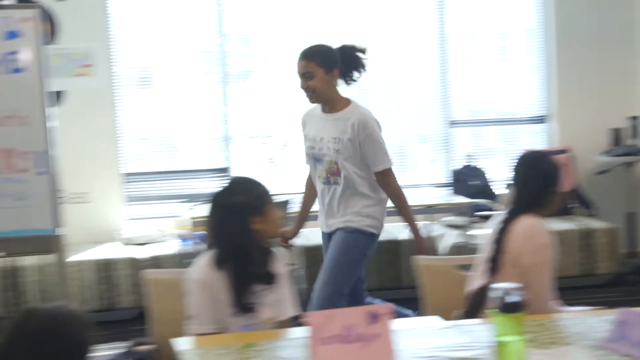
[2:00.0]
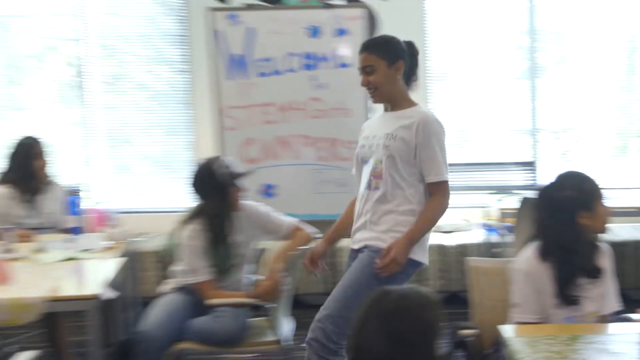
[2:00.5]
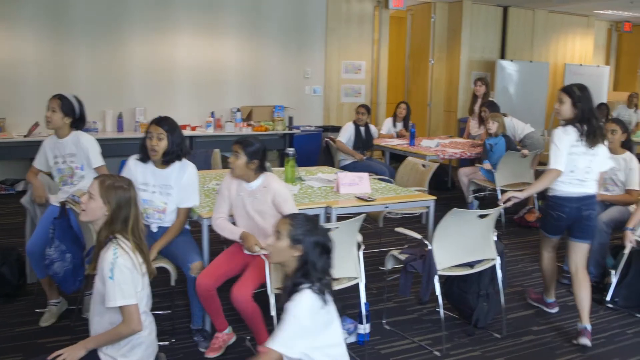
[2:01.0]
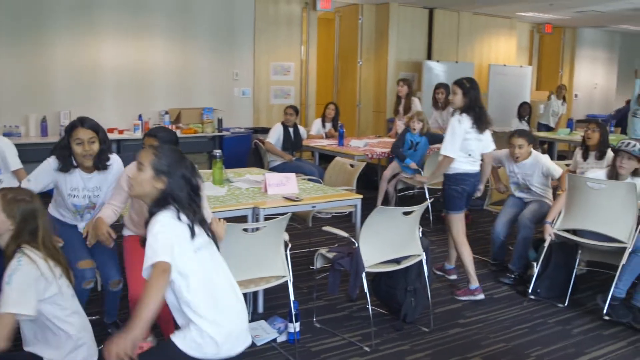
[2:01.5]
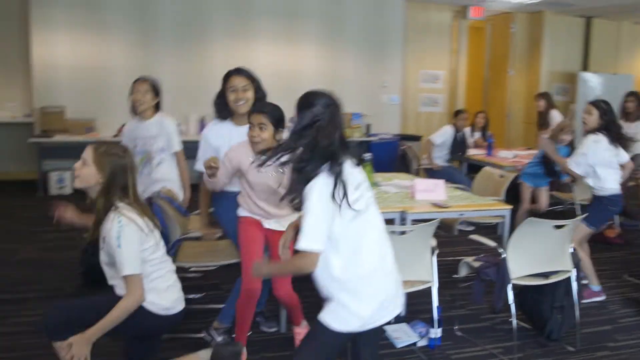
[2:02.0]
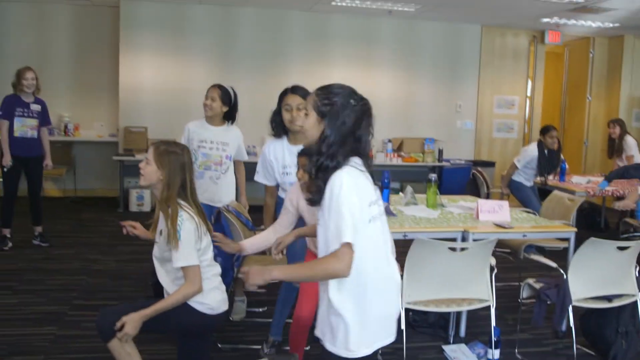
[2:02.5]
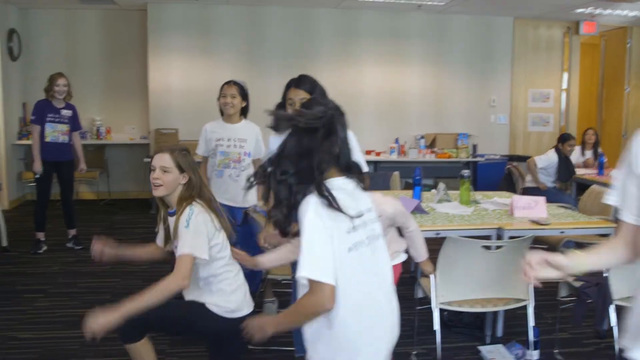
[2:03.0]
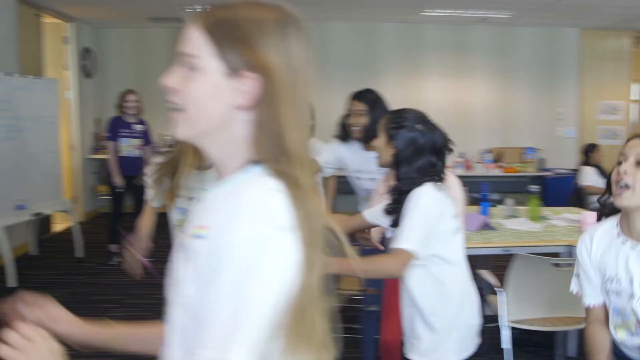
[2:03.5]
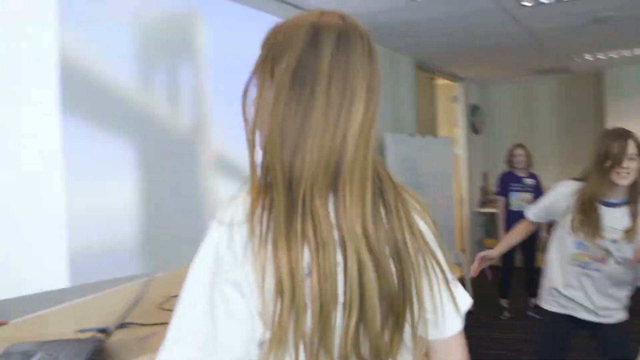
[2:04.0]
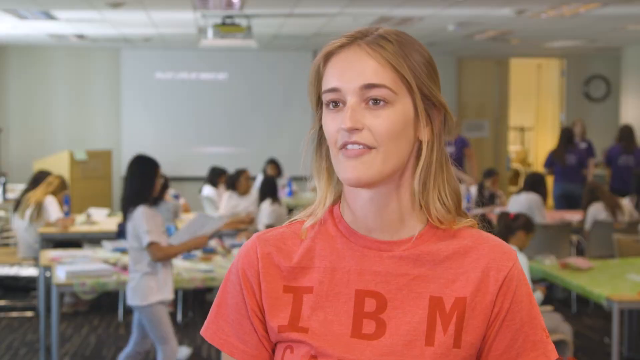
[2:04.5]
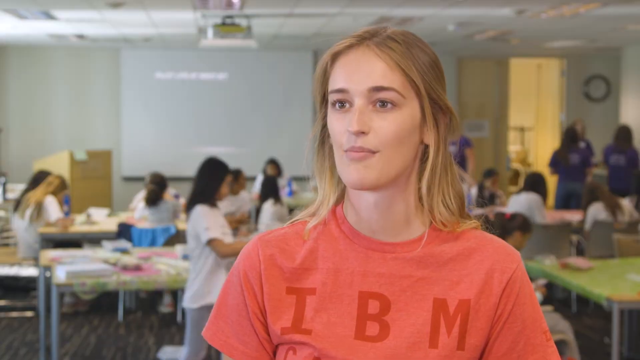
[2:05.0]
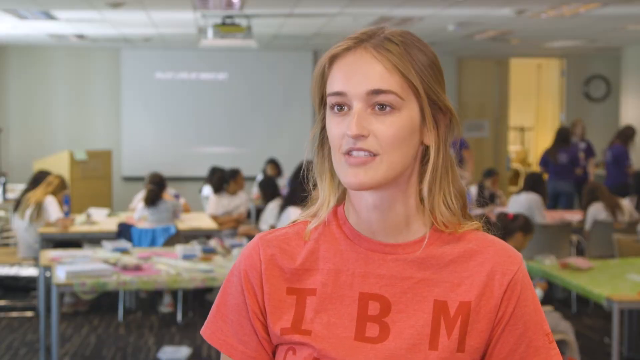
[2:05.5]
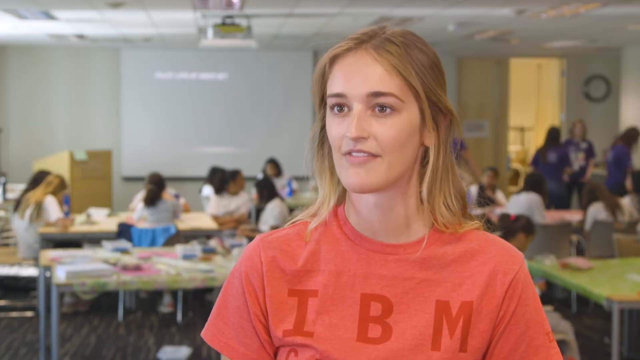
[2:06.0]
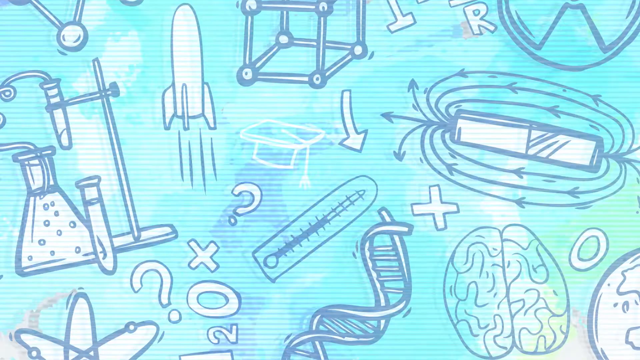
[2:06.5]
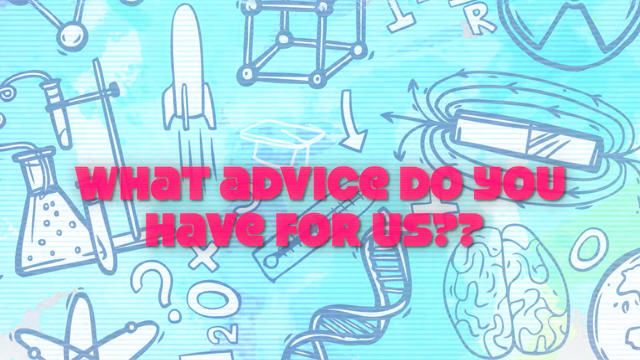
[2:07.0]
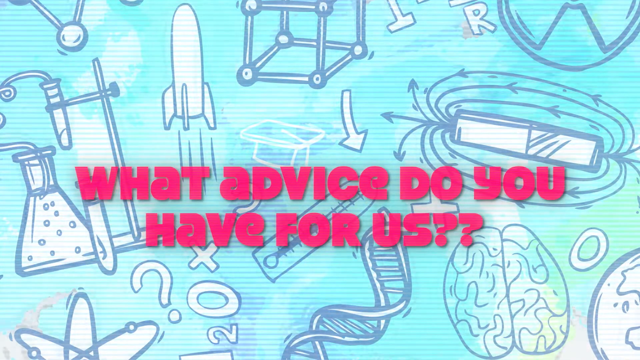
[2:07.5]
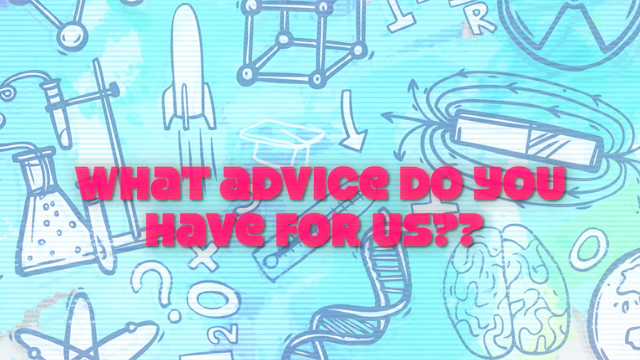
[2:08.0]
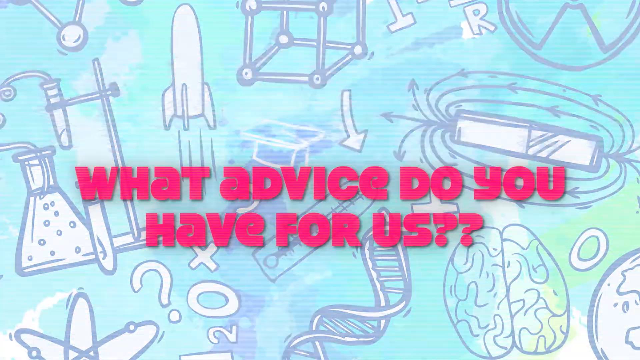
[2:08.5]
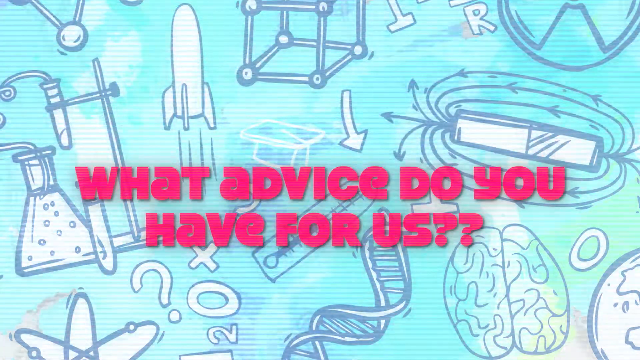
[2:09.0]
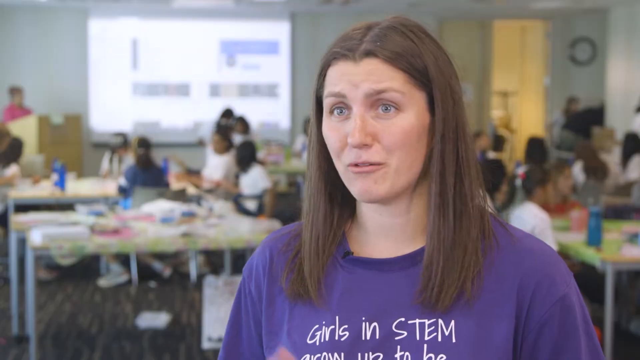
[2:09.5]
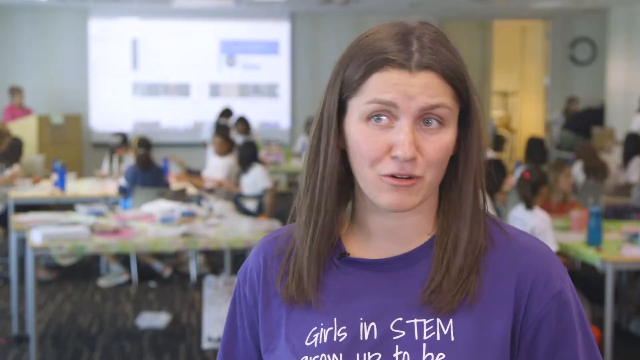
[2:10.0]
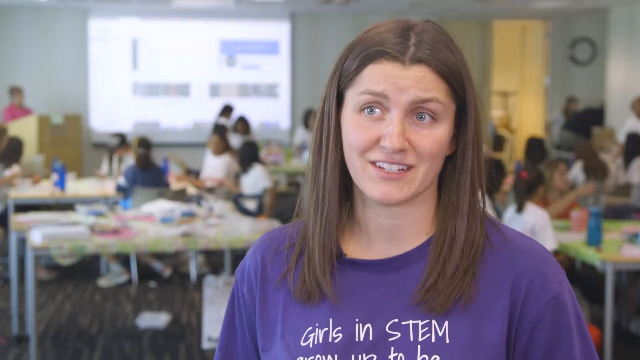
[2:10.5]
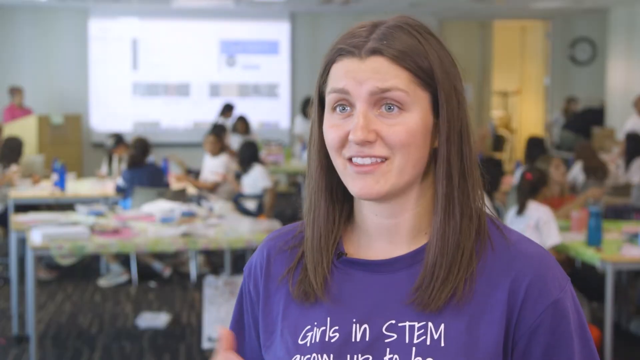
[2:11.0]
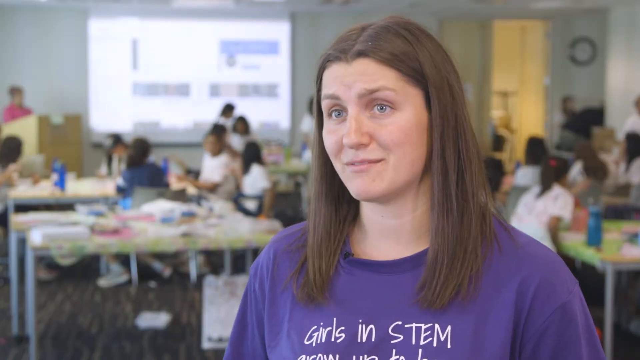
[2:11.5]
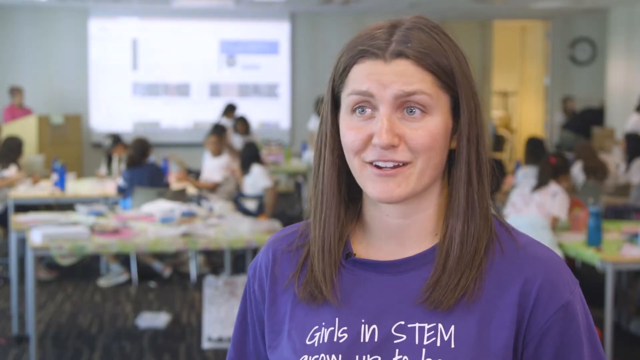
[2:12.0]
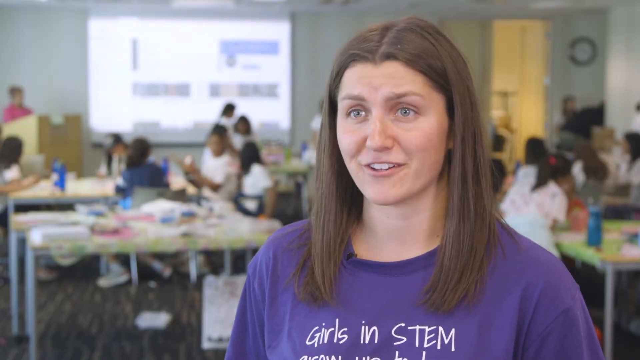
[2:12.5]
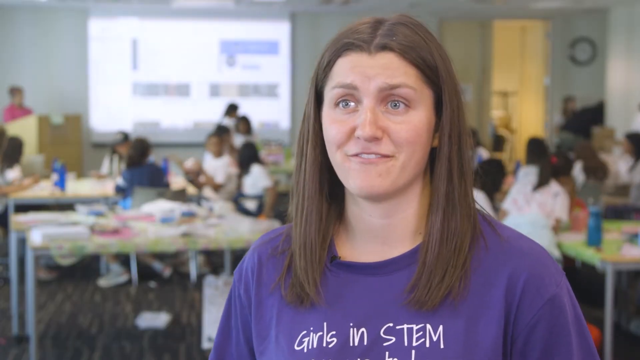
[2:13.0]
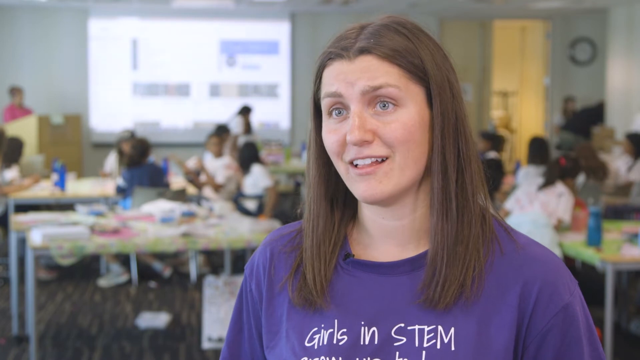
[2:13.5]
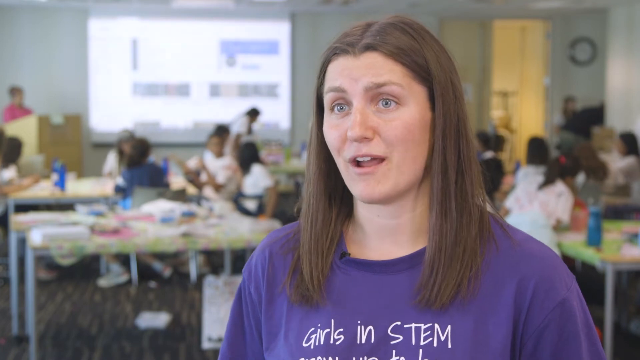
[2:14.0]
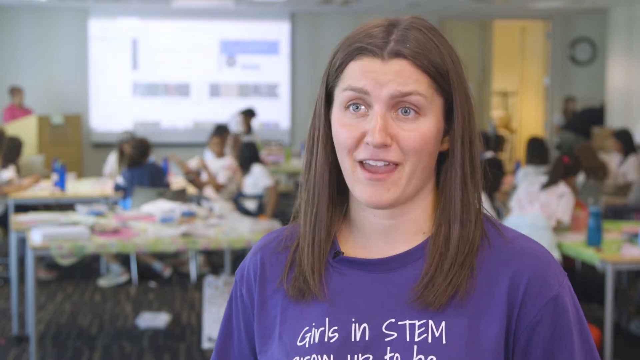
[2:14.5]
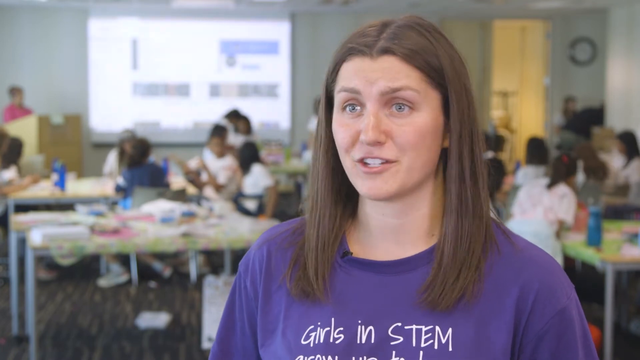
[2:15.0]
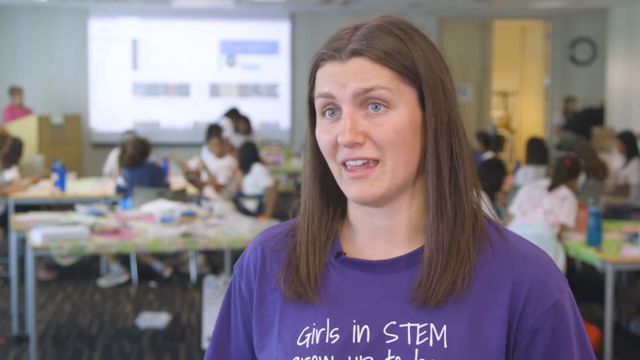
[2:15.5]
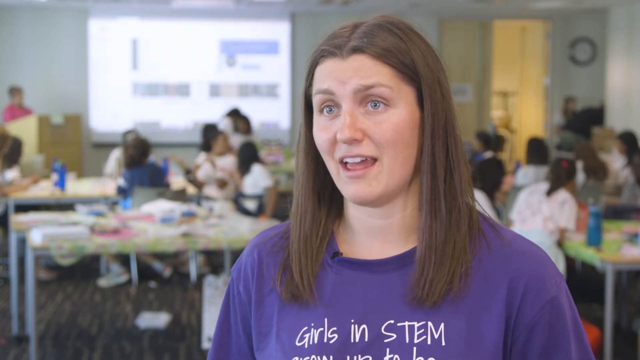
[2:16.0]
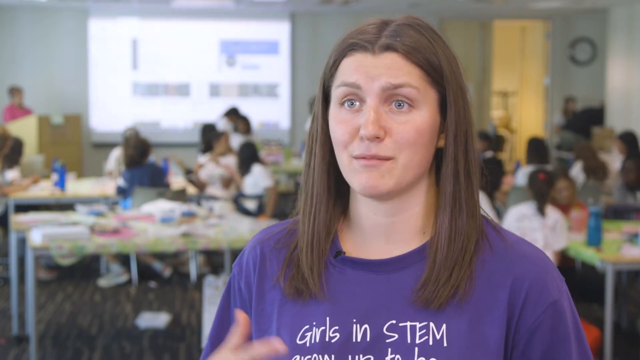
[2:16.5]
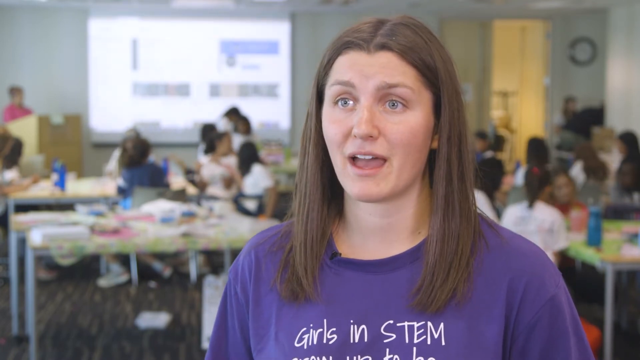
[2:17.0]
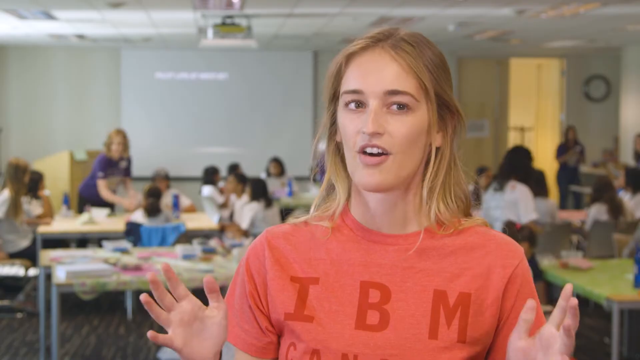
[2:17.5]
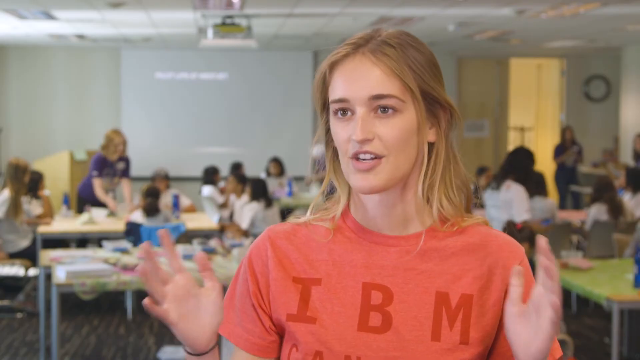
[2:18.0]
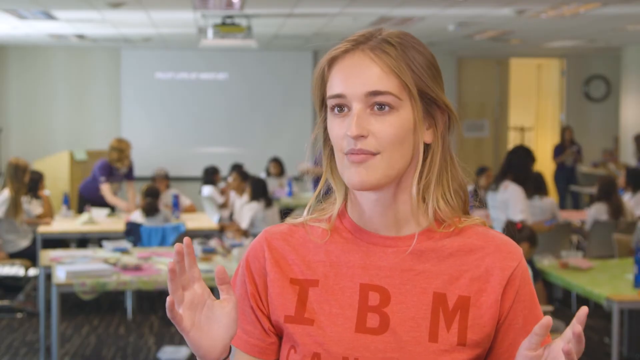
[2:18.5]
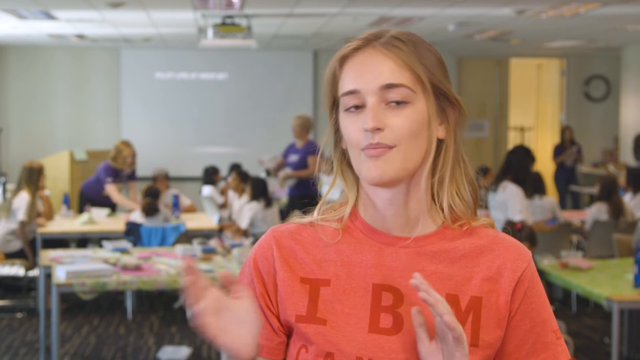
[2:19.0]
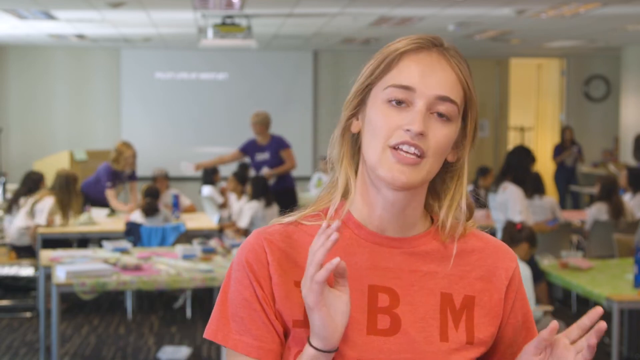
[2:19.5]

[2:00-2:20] In a computer lab for elementary children, with many elementary-age girls, a young Black elementary student runs back to her desk from the podium, and the students jump up, all excited. One of them runs to the whiteboard to write something. The camera pans to a white woman of about 25 with long blonde hair and brown eyes, in a salmon-colored IBM shirt, speaking to the camera. Text says "What advice do you have for us?" Another white woman with long dishwater blonde hair and a purple shirt that says "girls in STEM" speaks enthusiastically to the camera, showing bright white teeth and shaking her head back and forth. The woman in the salmon shirt then speaks enthusiastically, moving her hands left and right and her head left and right with them. The shot returns to the elementary girls around their round and rectangular tables, paying attention to the instructors, all smiling and engaged in the lesson.